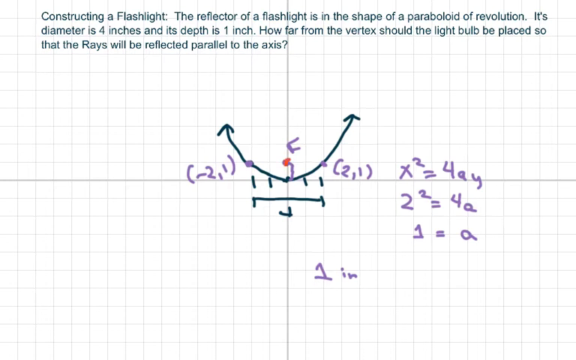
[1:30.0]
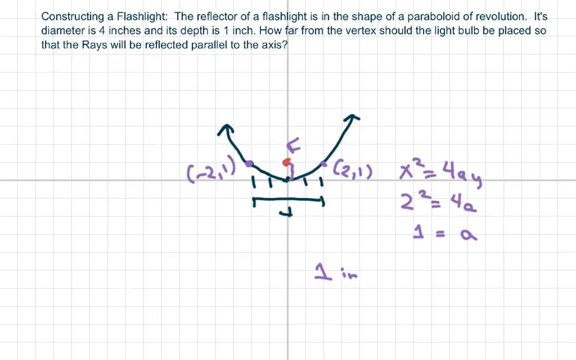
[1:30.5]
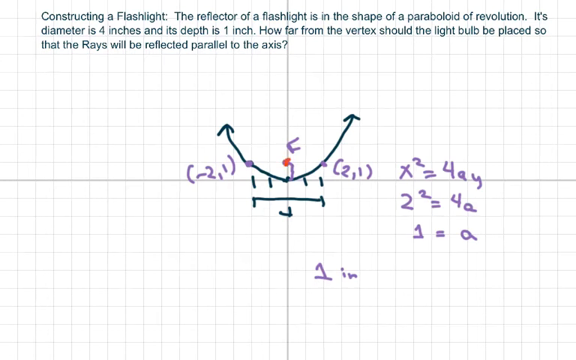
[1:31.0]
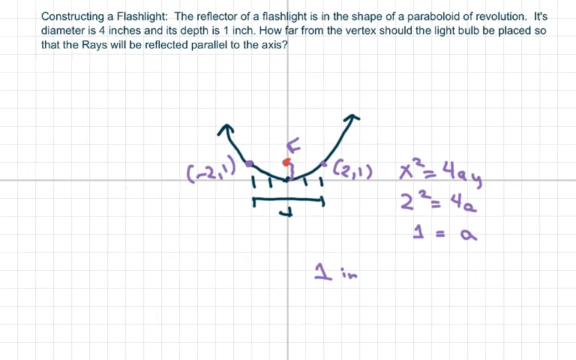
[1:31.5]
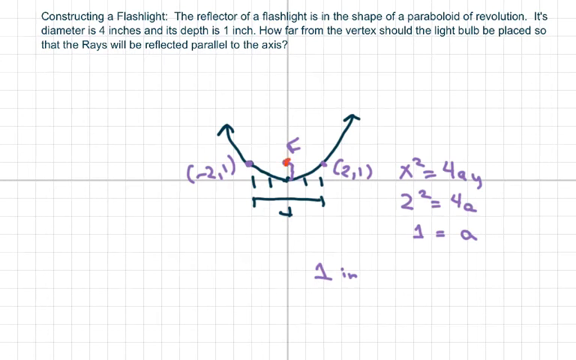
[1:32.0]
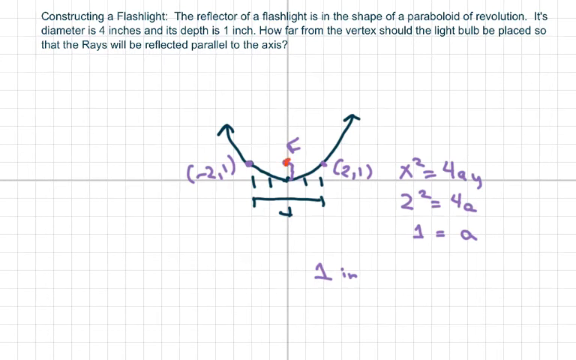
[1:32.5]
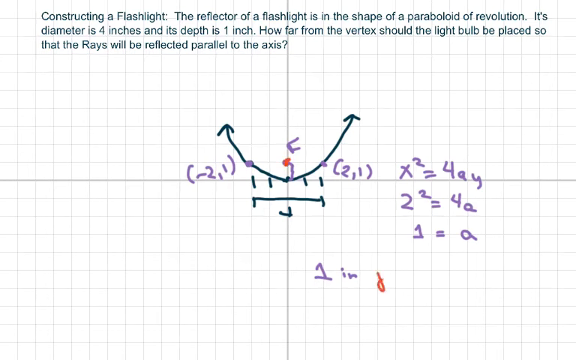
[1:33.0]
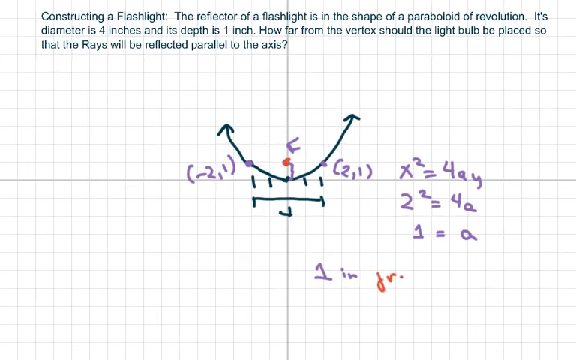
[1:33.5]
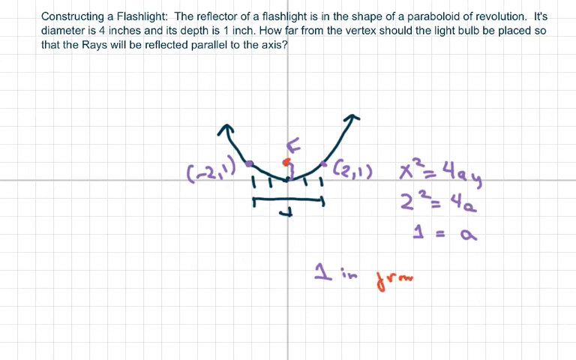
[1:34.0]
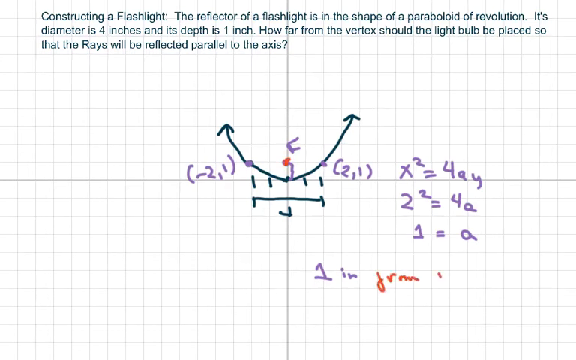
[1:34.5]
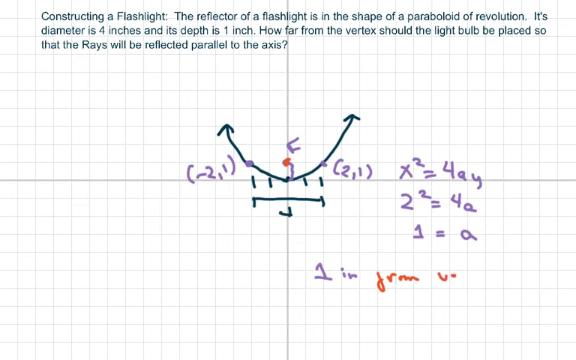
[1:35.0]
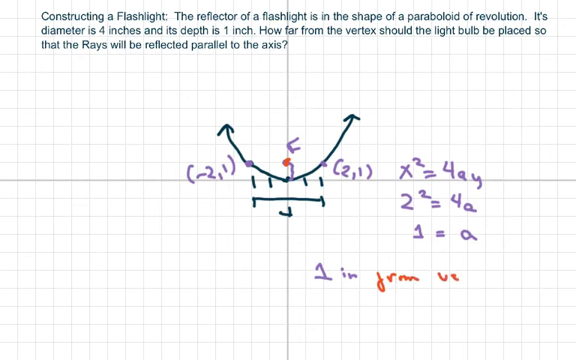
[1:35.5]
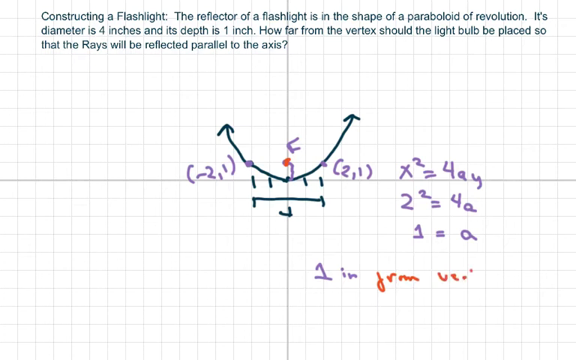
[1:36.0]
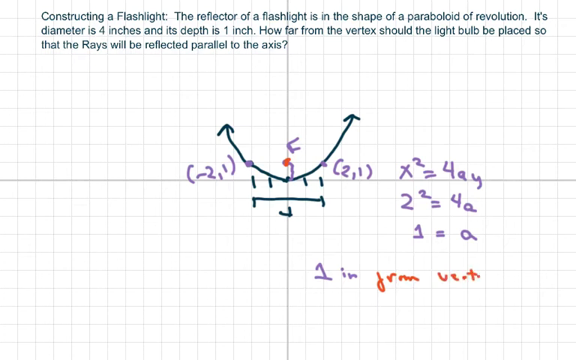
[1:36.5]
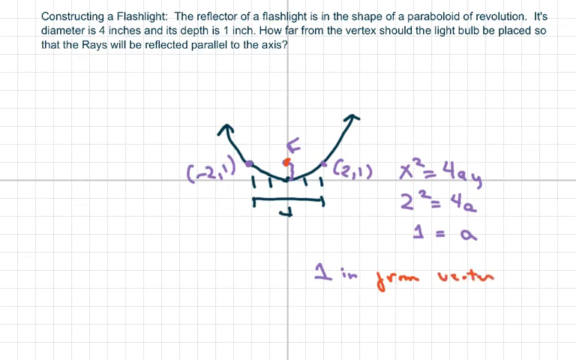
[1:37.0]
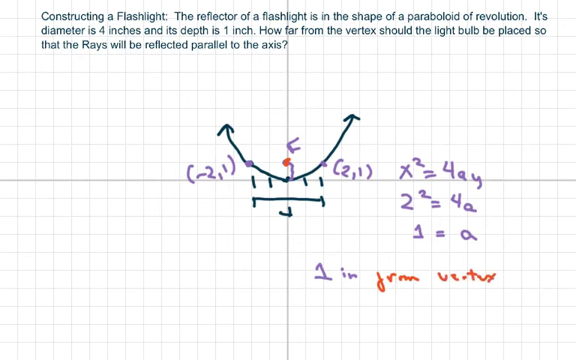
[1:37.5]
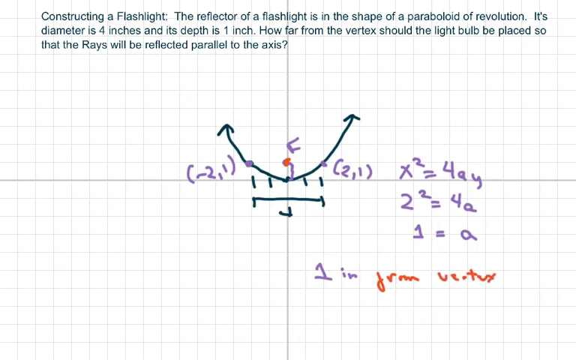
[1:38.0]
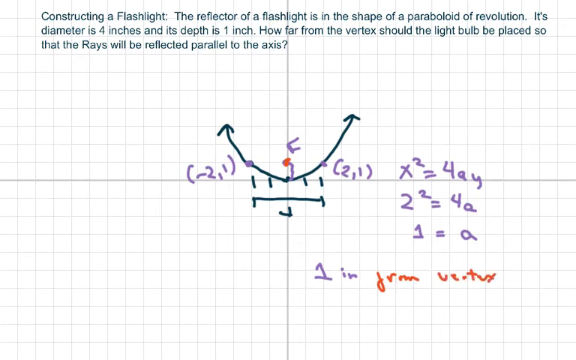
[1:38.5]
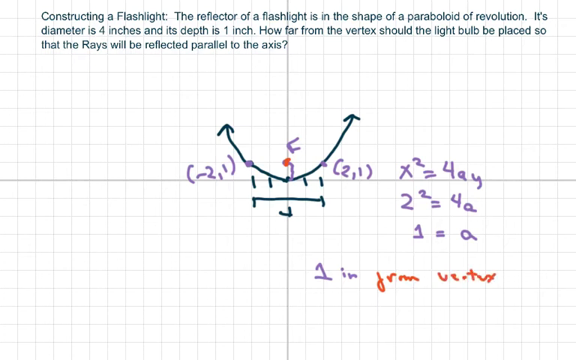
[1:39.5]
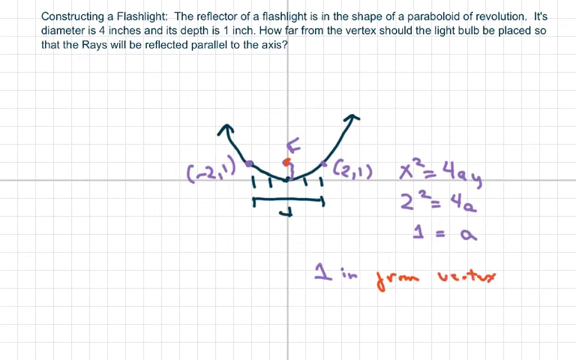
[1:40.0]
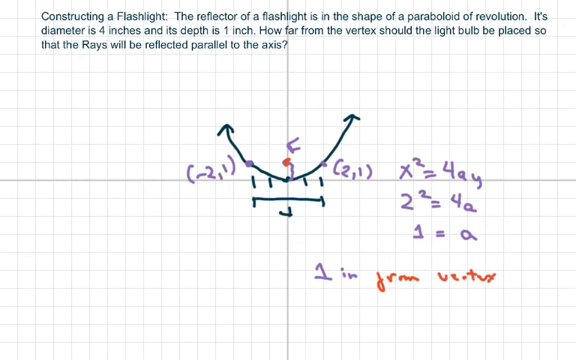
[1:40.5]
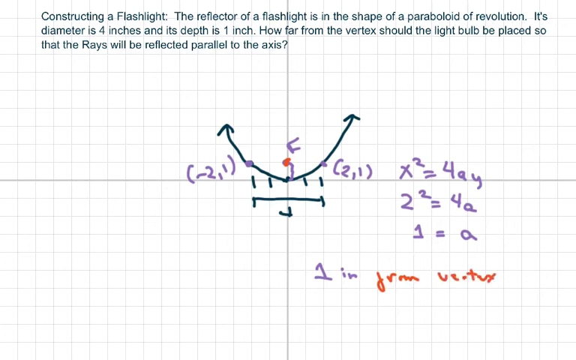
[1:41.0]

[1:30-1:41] A red marking pen is now writing, following the earlier green and purple. The red writing is not clearly legible; it seems to read "FRM" followed by a V and then a T. The only red marking that is clearly visible is the dot.